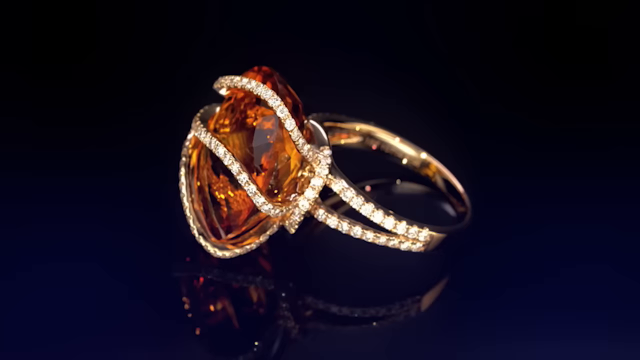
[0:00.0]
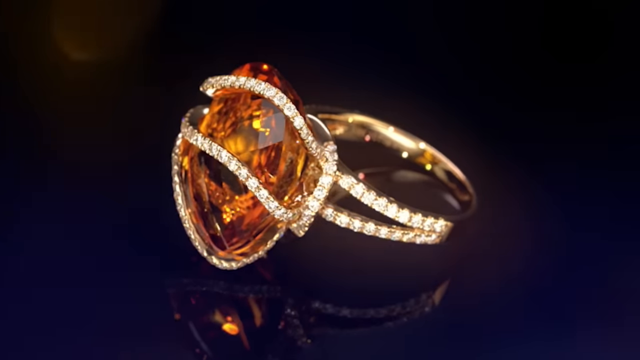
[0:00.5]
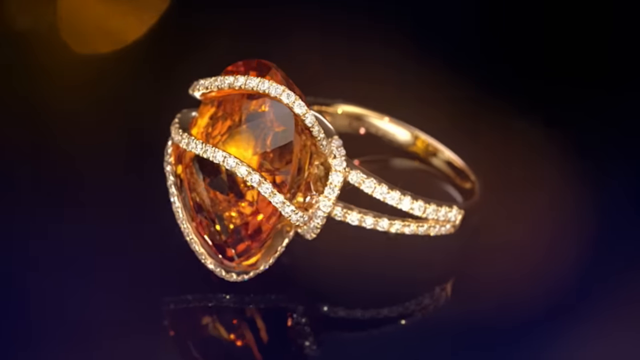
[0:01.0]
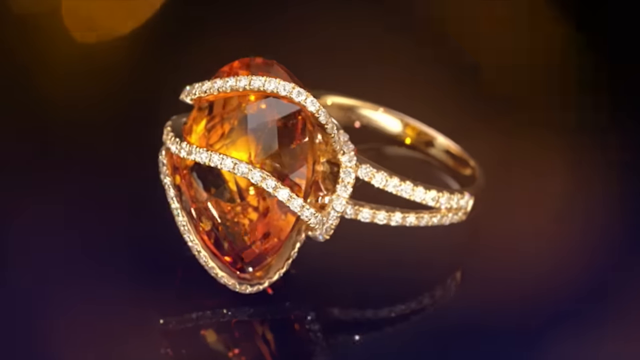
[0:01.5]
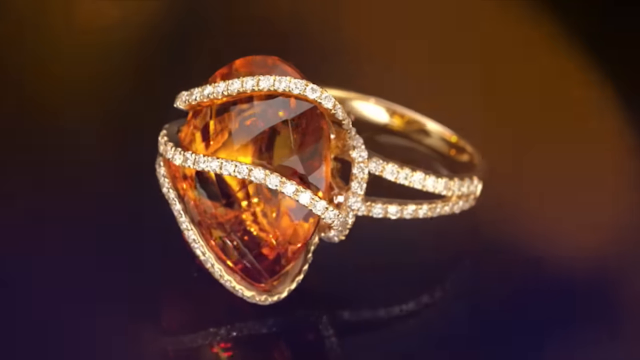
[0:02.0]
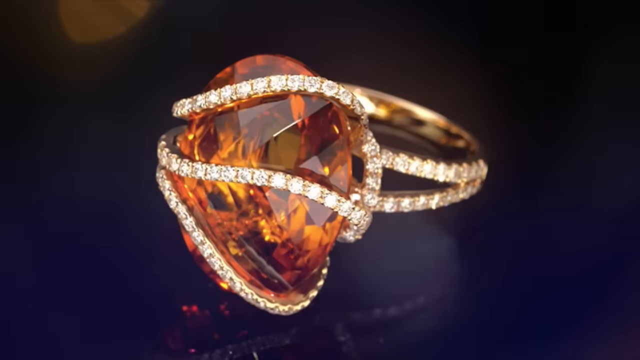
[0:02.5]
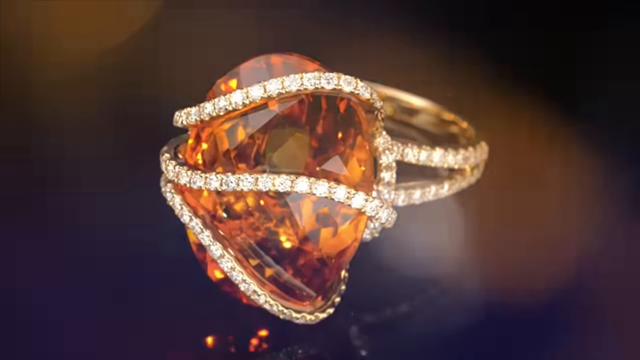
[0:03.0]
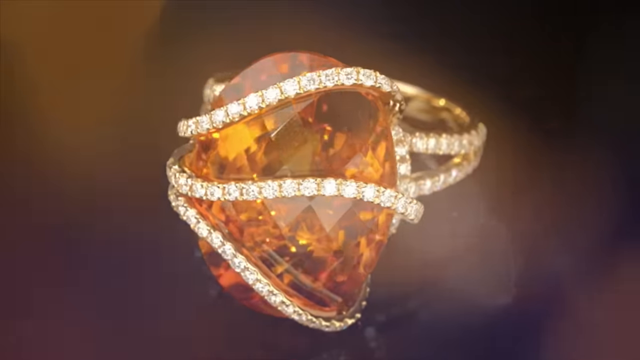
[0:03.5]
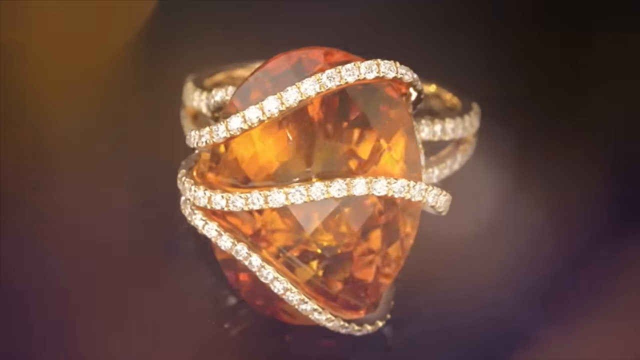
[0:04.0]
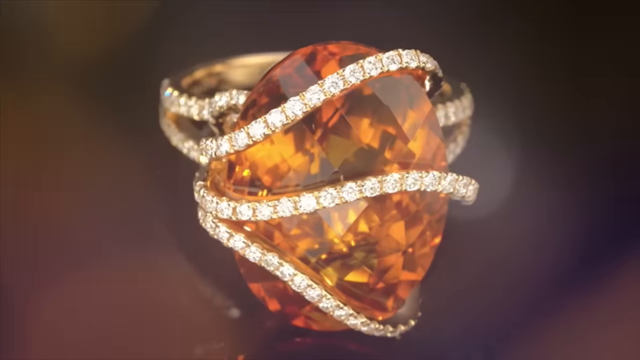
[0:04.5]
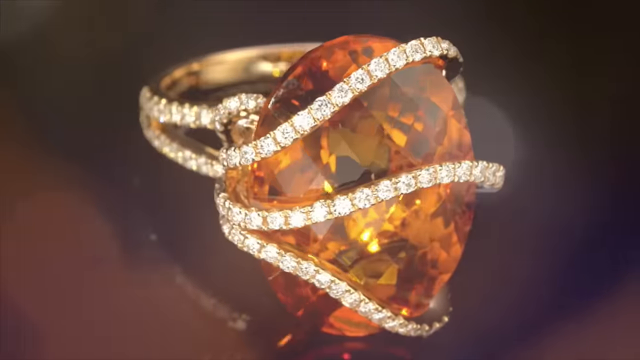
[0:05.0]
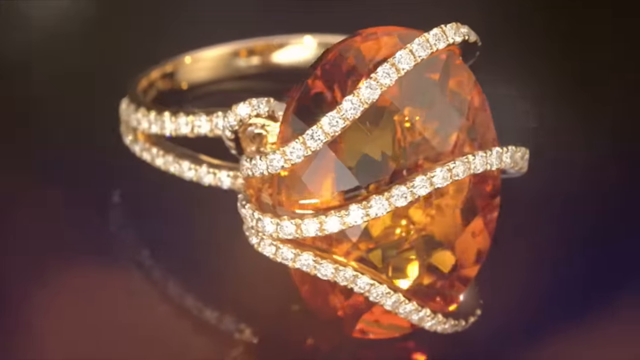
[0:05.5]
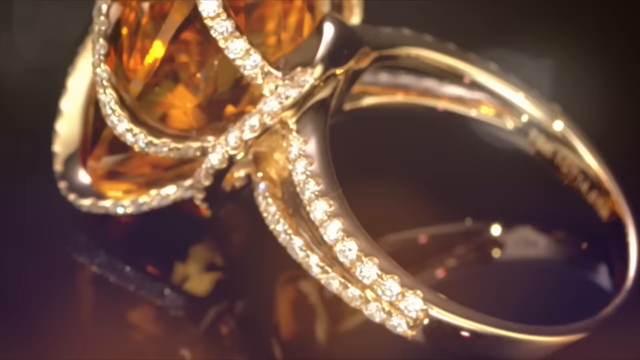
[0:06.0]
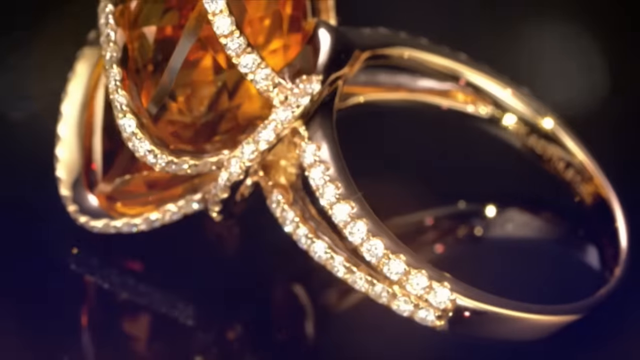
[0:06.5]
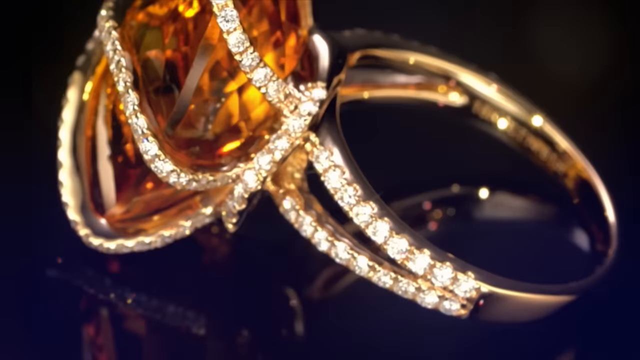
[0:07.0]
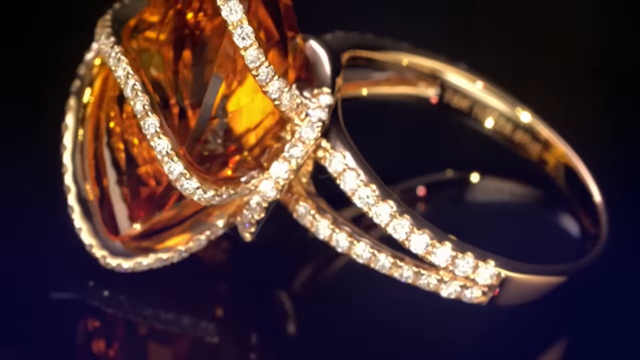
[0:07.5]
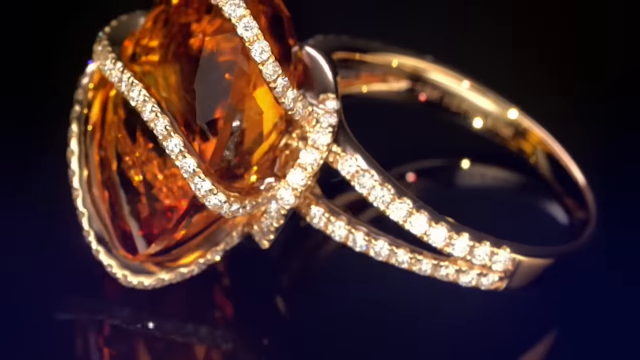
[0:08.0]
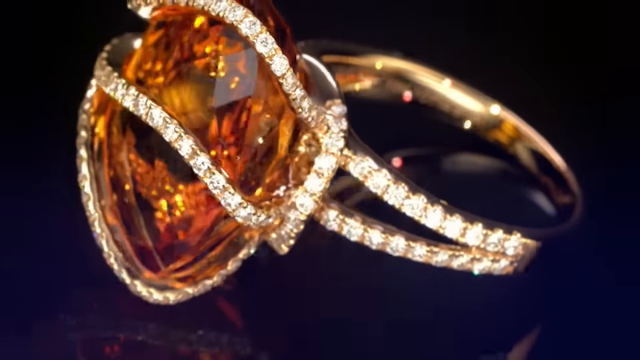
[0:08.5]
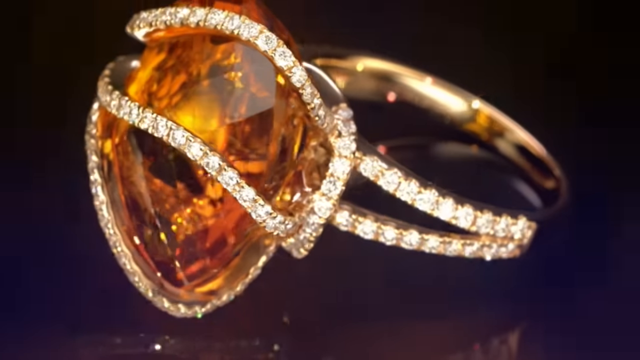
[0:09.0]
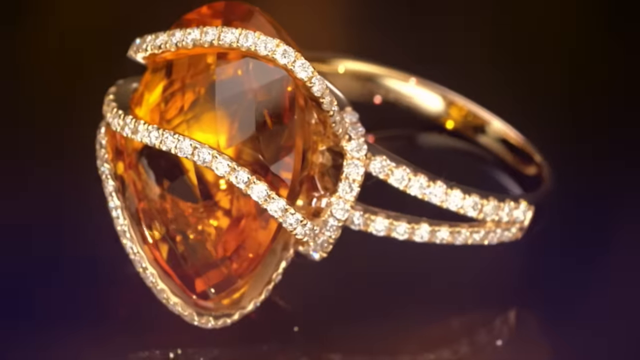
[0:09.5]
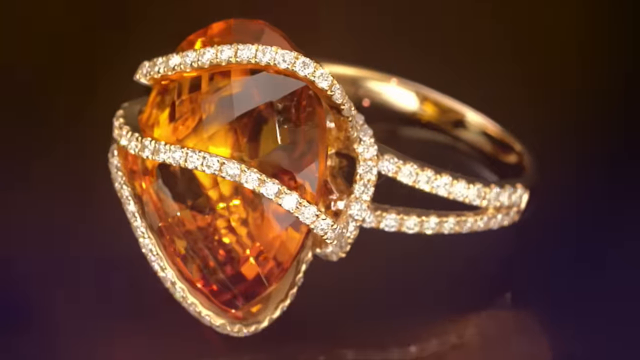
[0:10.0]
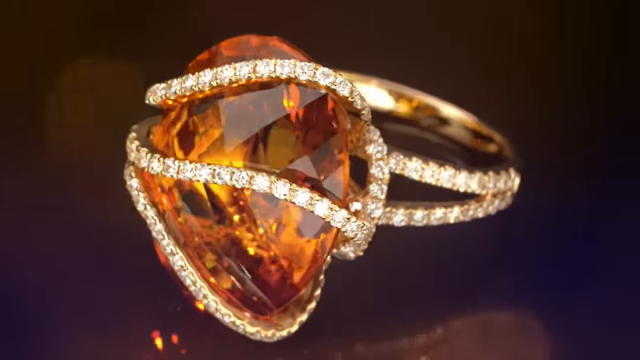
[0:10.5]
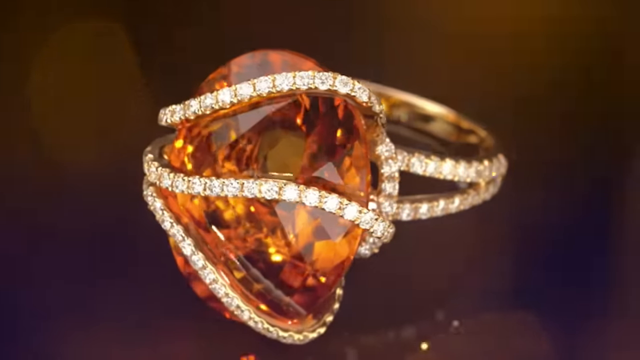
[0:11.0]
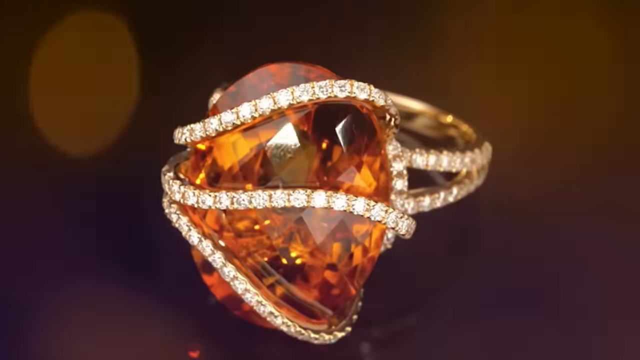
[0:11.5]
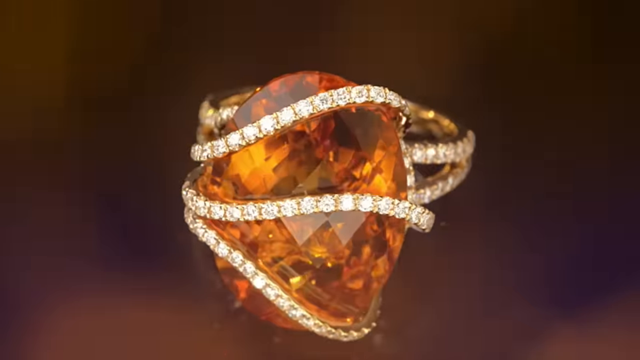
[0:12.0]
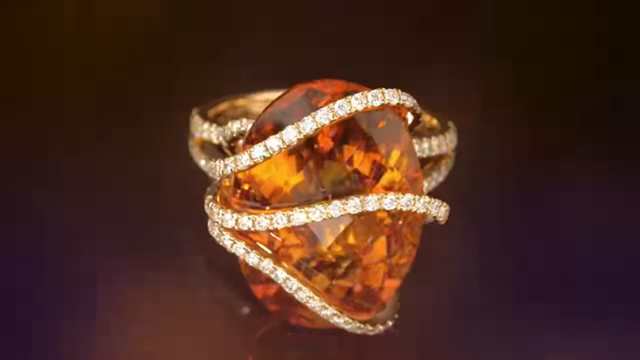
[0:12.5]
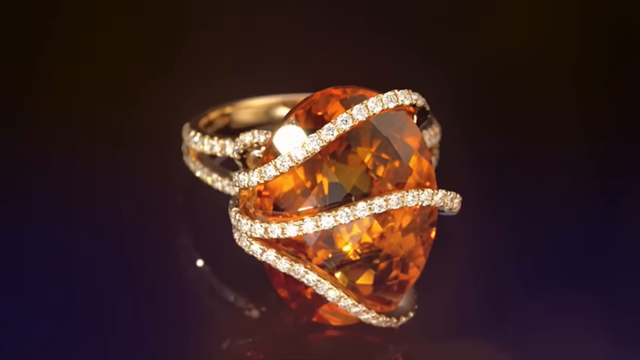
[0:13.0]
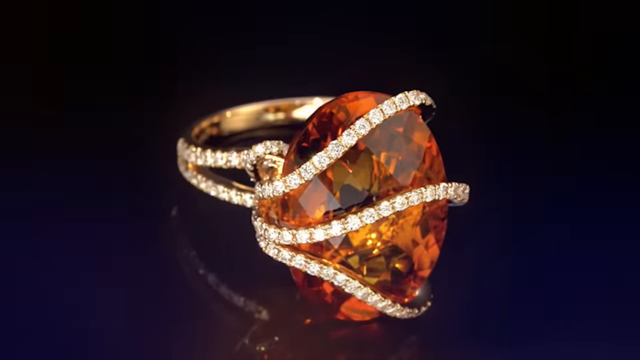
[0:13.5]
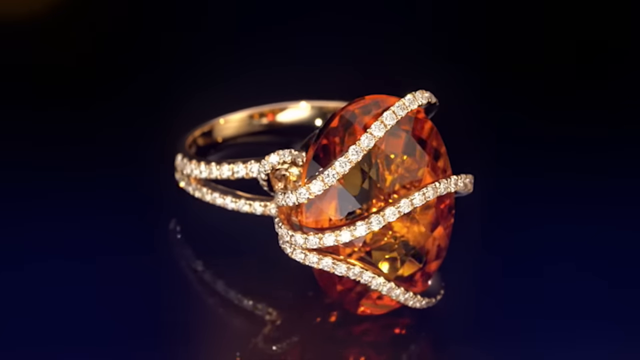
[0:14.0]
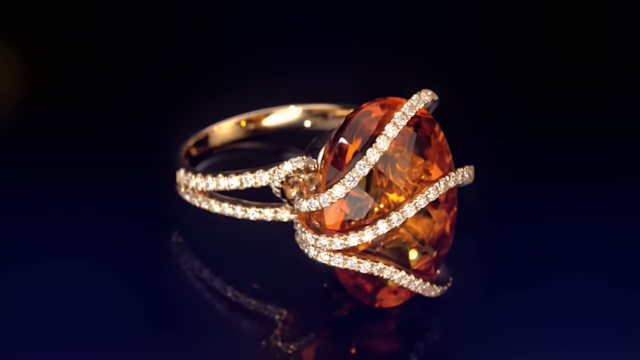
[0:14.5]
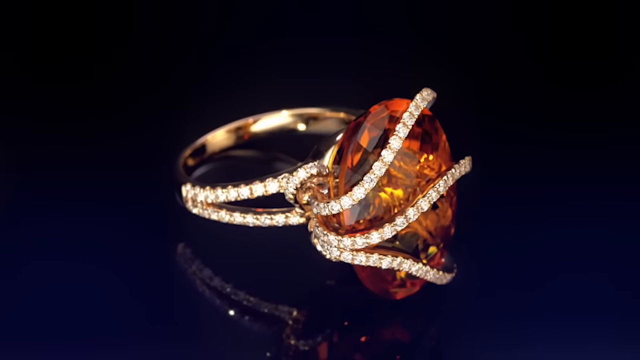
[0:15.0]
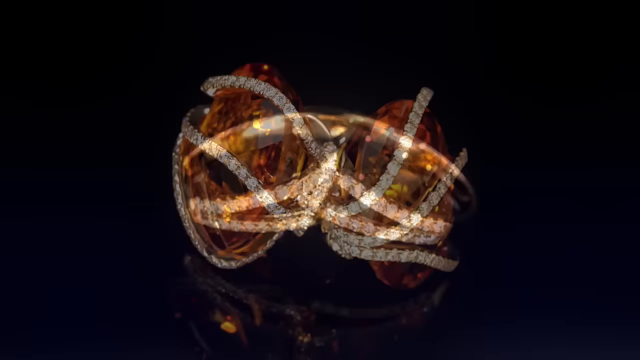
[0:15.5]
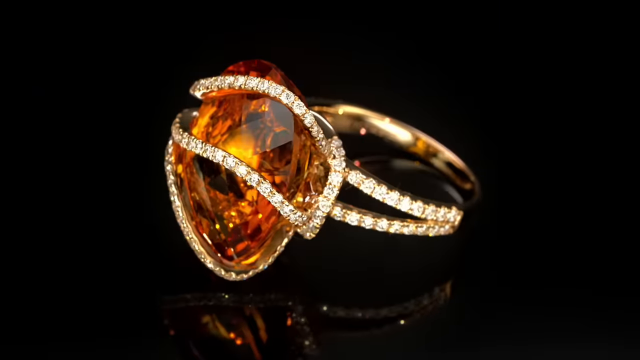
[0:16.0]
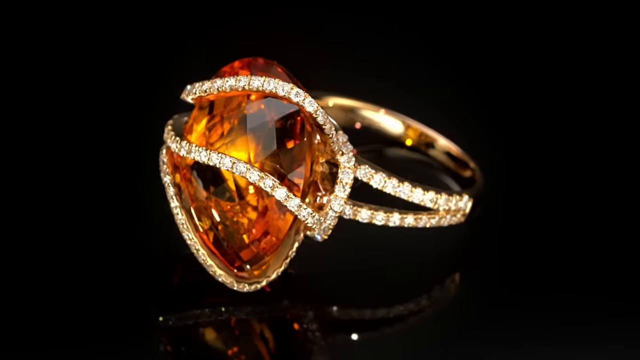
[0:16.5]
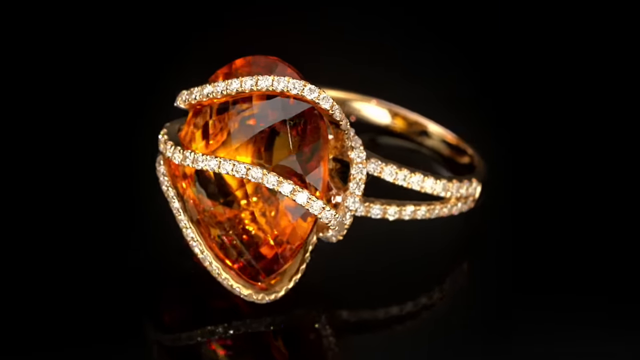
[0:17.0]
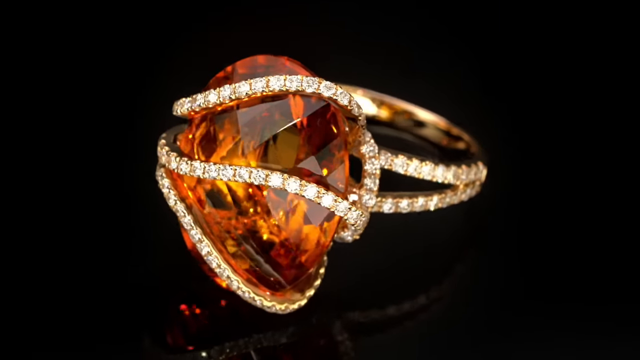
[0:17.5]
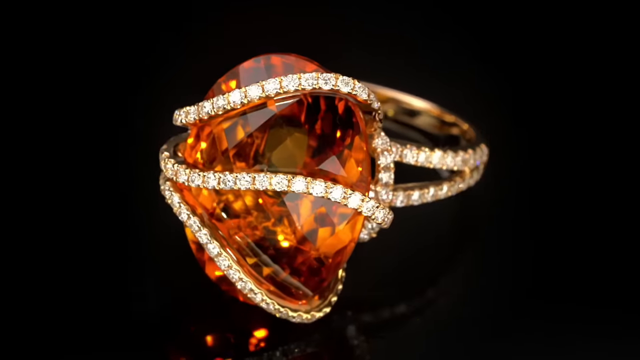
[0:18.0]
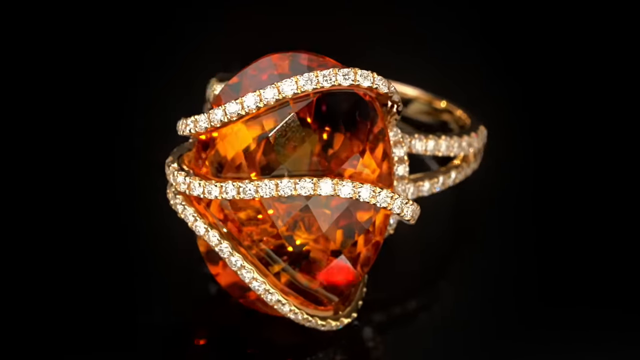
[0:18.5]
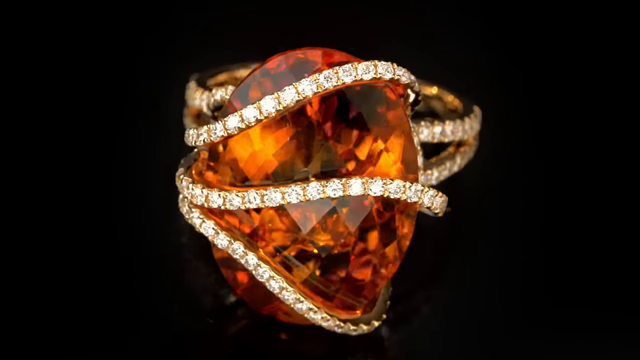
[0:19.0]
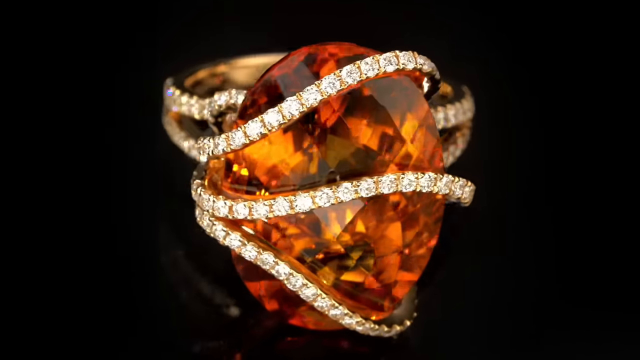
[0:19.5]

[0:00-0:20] A large diamond ring appears, looking like an amber because of its sort of deep golden hue. The background is out of focus, and the ring is laying down on a shiny, glossy surface, as its reflection is visible. As the camera zooms into the ring, the ring rotates. The ring is gold, with two thin gold bands that are kind of fused together and separate at the setting. Three bands wrap around a large oval diamond, and multiple cuts are visible. The three bands gather close on one side; as they separate, the center band is sort of curved, and they wrap around on the other side. The ring is quite massive. At the base of the setting, another band of diamonds wraps around it. It looks to be a very large stone.